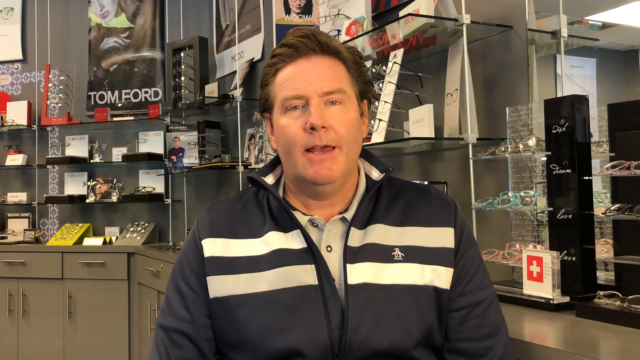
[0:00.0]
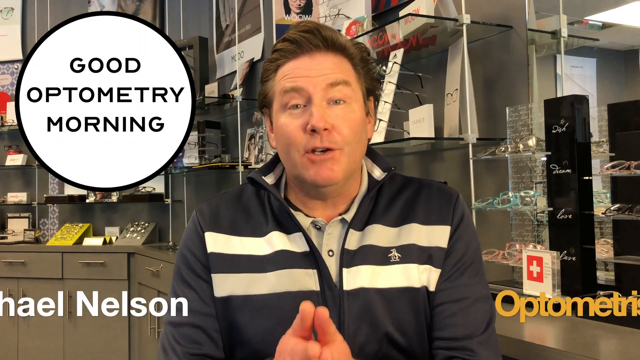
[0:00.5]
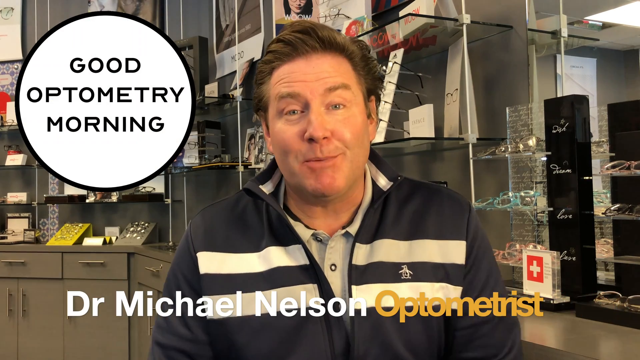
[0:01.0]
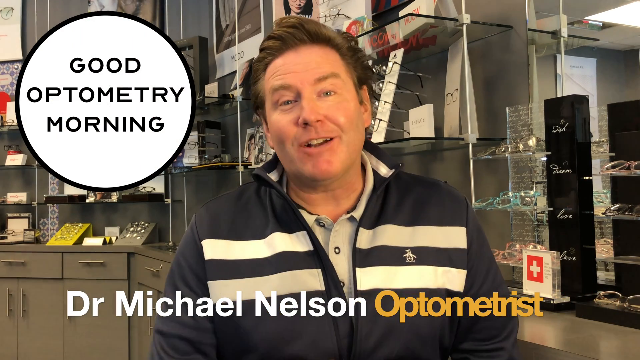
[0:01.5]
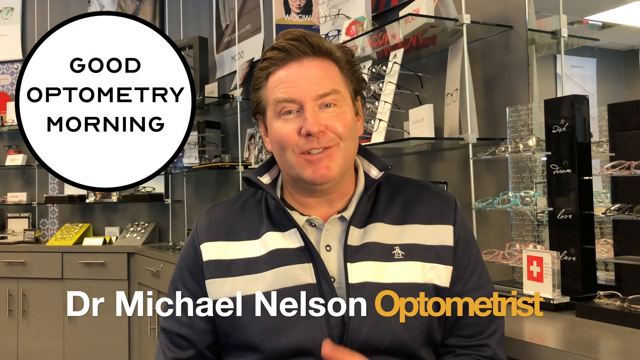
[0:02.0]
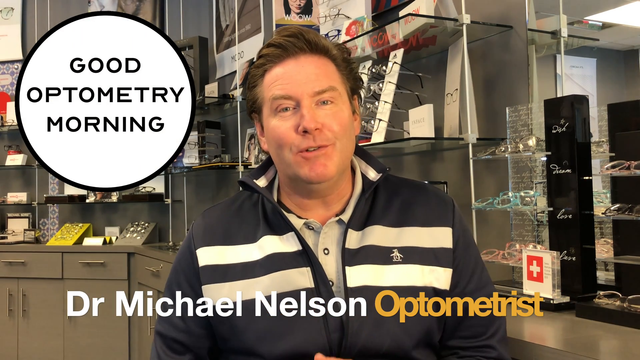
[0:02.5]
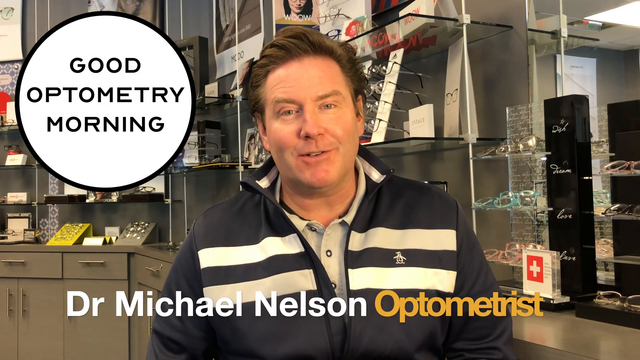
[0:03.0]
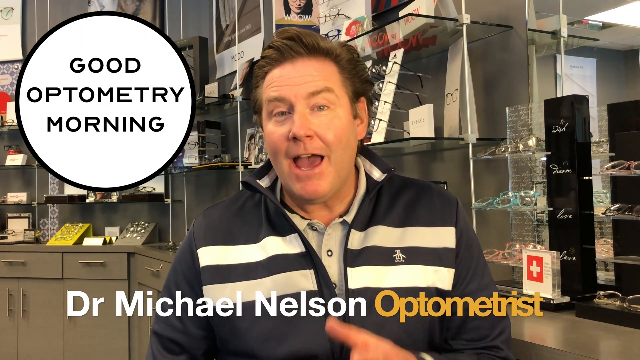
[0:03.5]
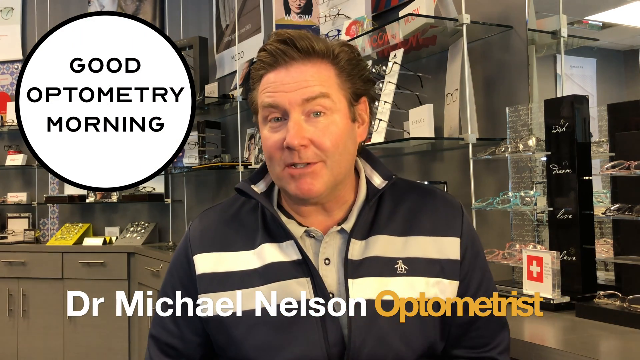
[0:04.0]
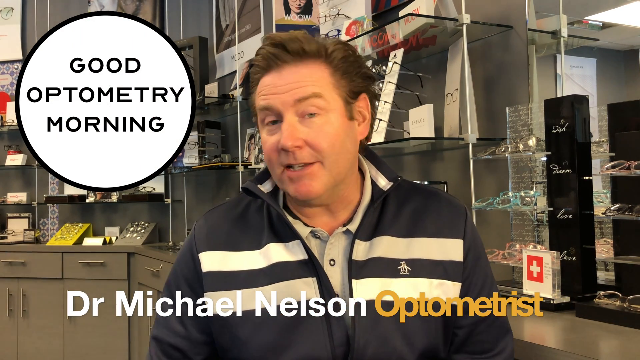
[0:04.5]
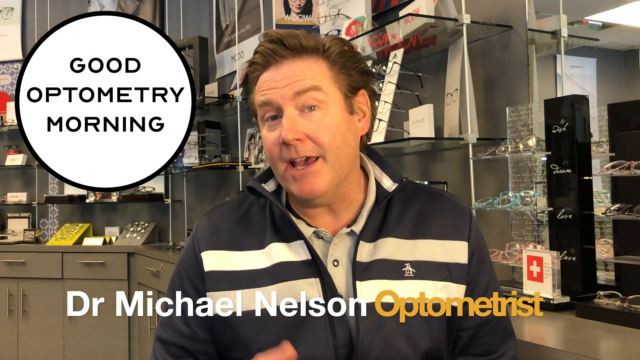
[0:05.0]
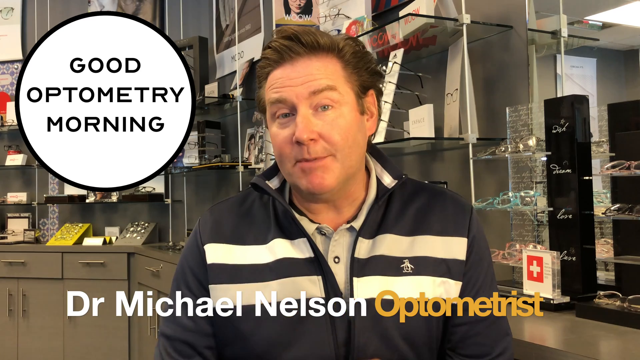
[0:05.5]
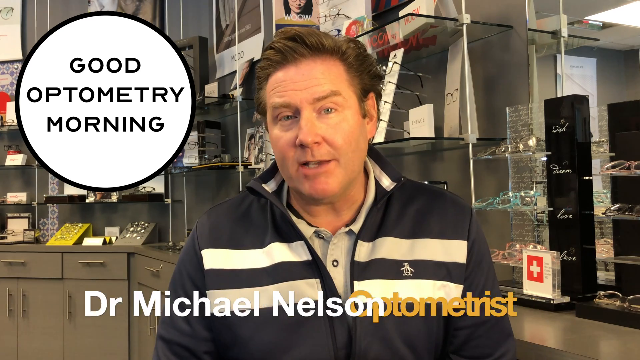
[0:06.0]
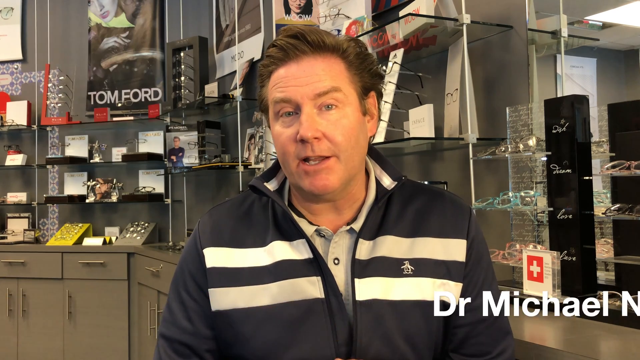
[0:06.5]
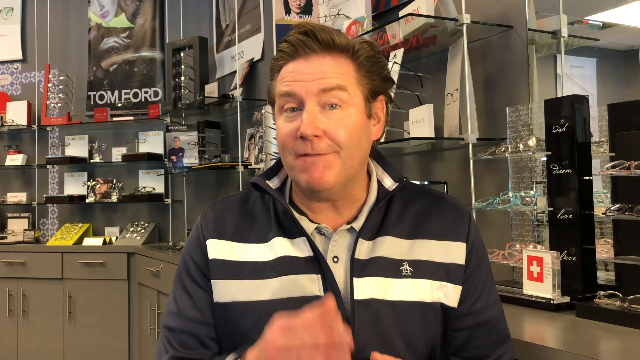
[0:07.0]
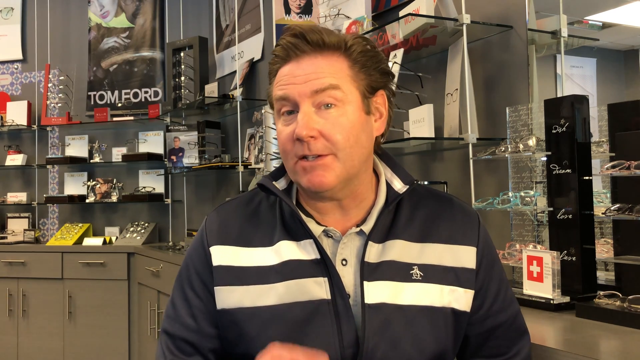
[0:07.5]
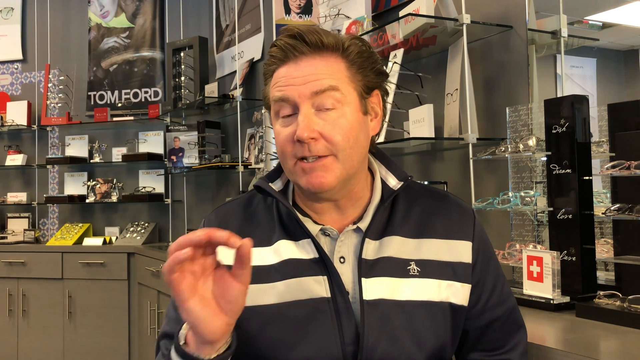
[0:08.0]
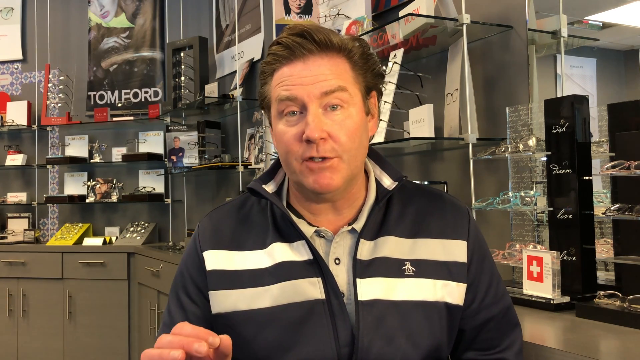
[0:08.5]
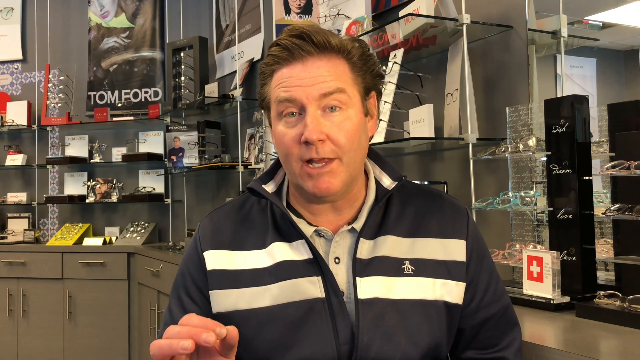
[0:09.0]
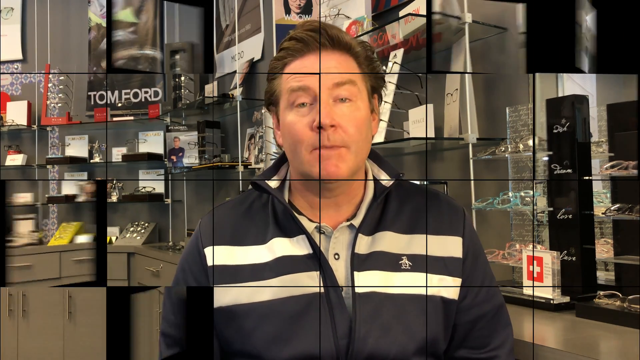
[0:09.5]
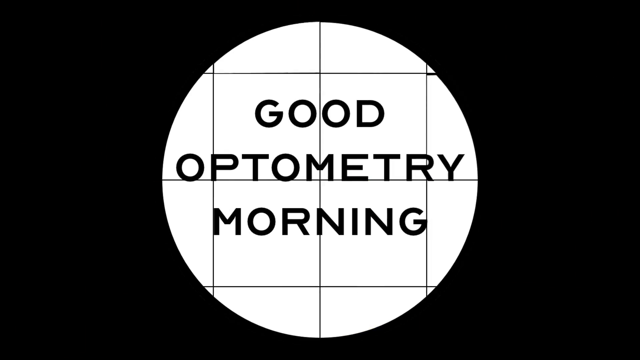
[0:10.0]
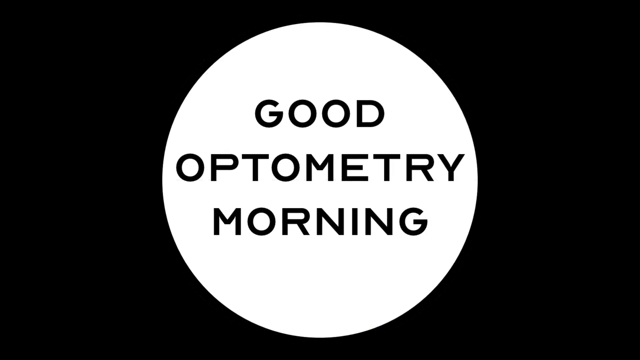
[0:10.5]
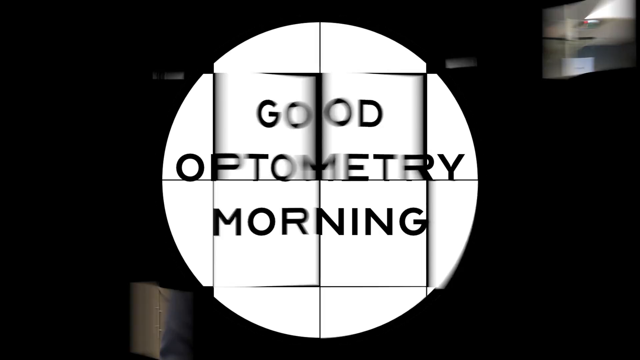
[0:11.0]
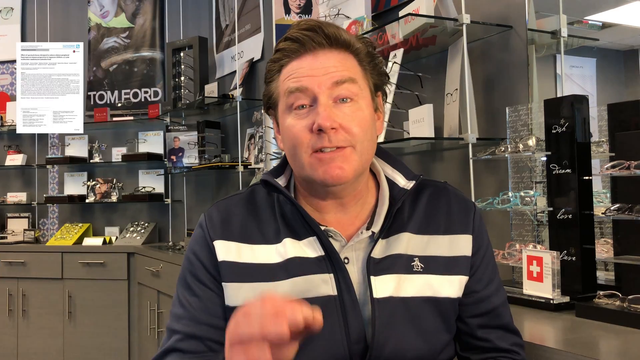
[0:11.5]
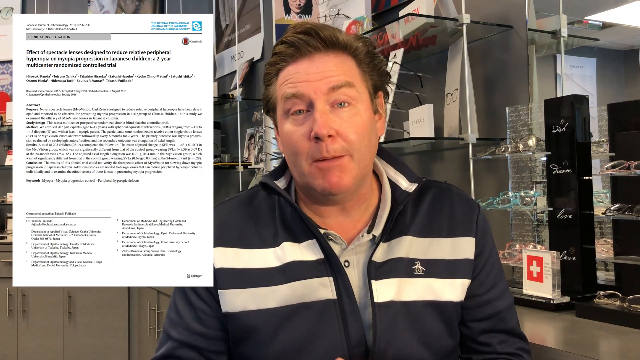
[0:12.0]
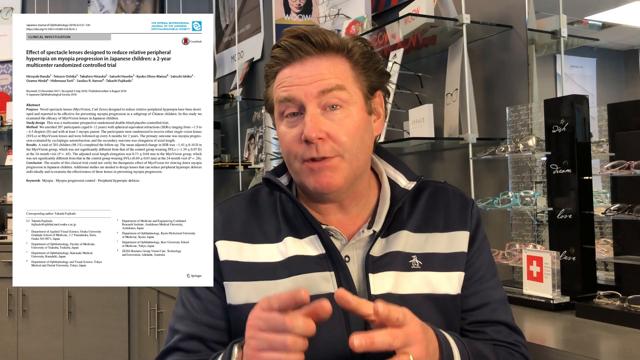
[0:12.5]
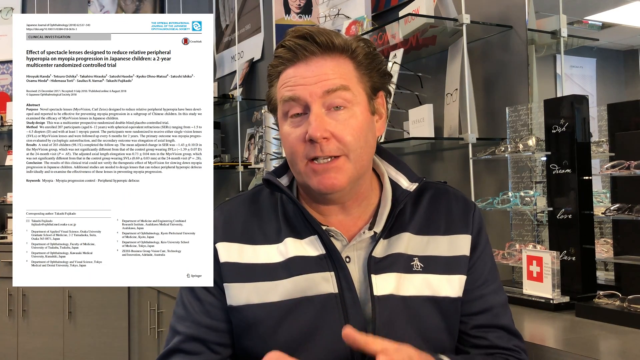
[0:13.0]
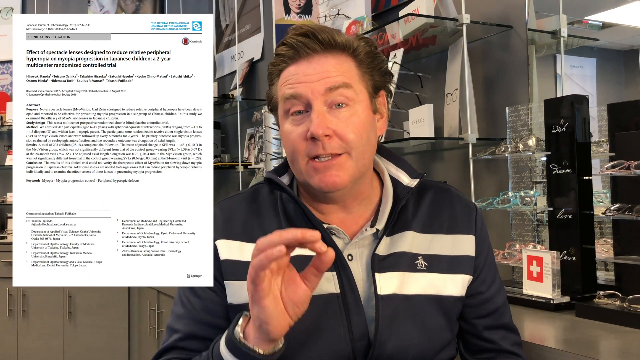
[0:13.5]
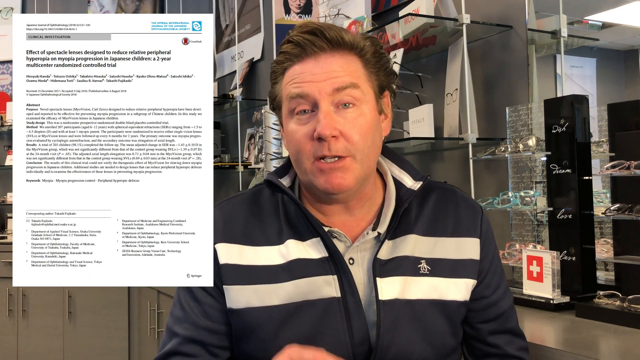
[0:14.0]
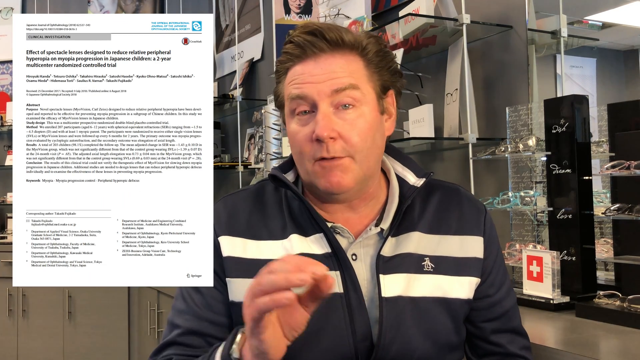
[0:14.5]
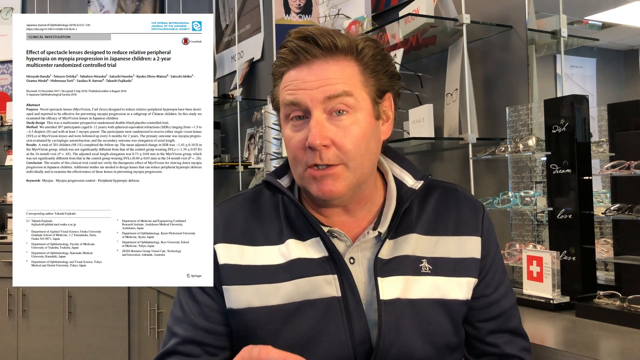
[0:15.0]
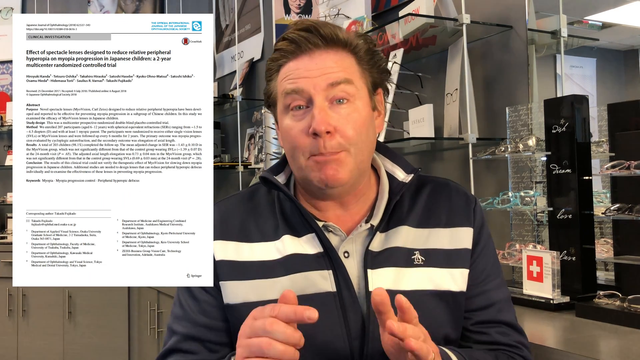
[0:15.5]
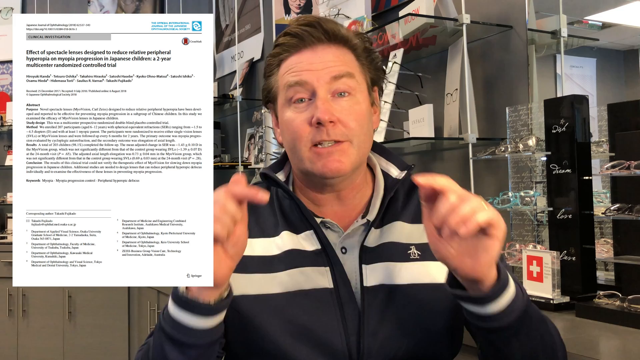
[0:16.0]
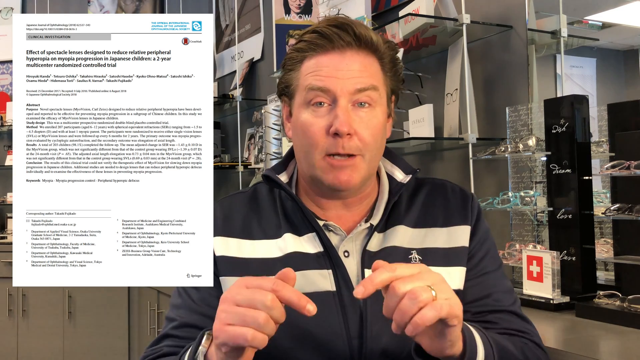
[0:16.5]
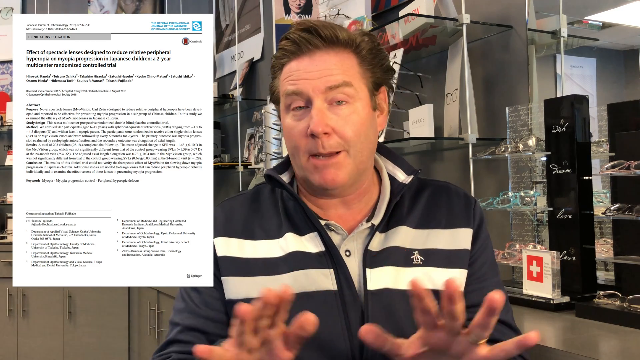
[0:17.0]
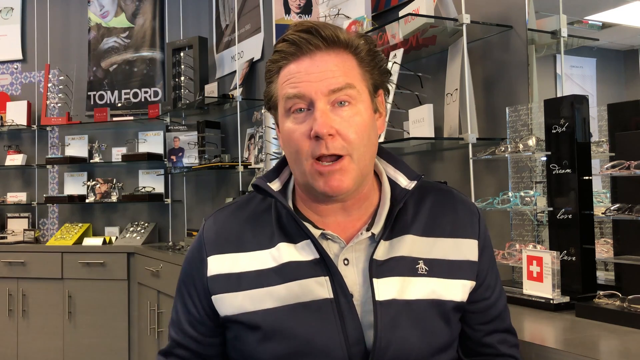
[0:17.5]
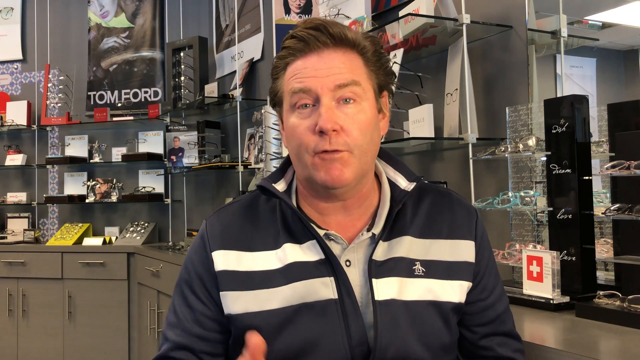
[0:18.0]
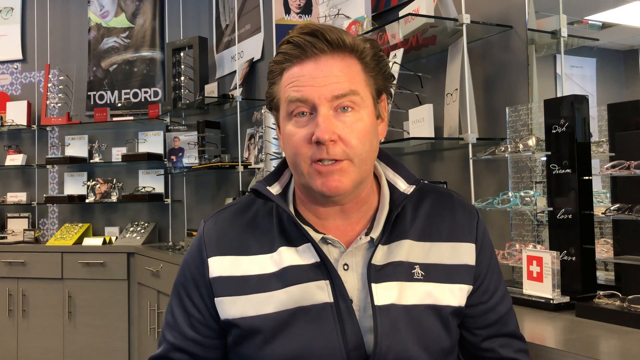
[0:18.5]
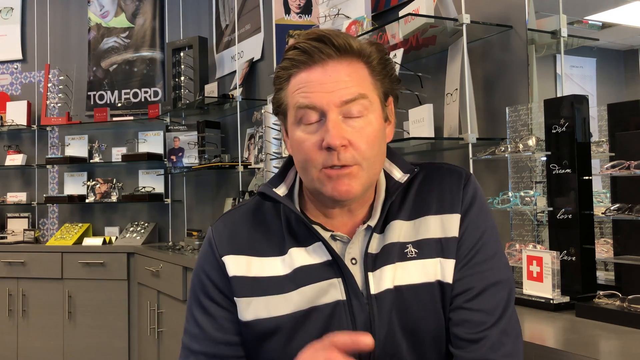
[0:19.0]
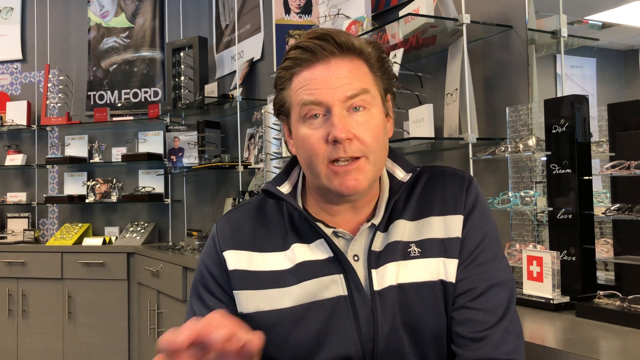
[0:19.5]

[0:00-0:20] A Caucasian man, probably around 30 to 35, with short brown hair wears a sort of whitish, navy blue style shirt. A sort of paper is displayed on the screen, with various video transitions. Behind him is a Tom Ford poster, and many jewelry pieces, including earrings and necklaces, are displayed around him. The man talks, and the text "good optimally morning" appears on the screen, along with the text "dr mitchell nelson optometry". The video transitions away and the man continues talking. Then a black screen appears with a circle containing black text reading "good optimally morning". A piece of paper appears on the screen before the video transitions out. No one other than this man is shown.